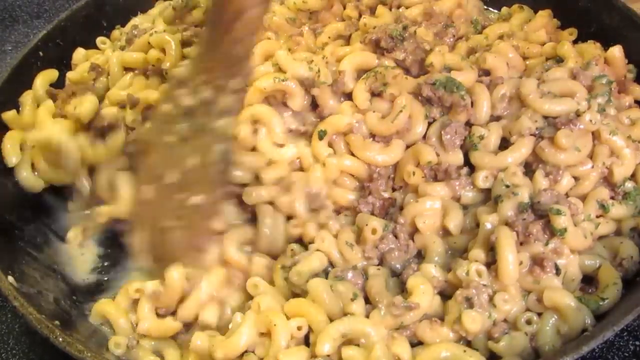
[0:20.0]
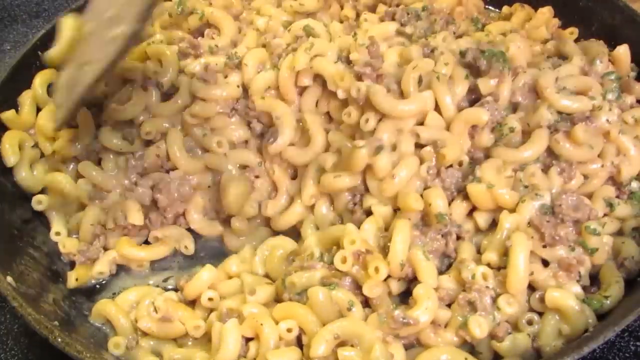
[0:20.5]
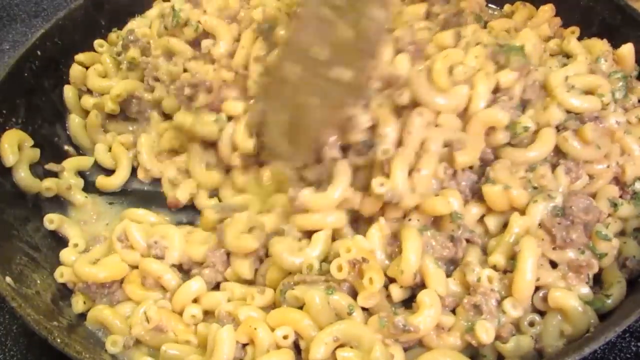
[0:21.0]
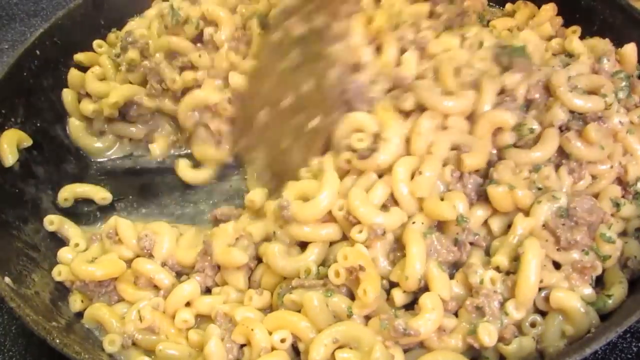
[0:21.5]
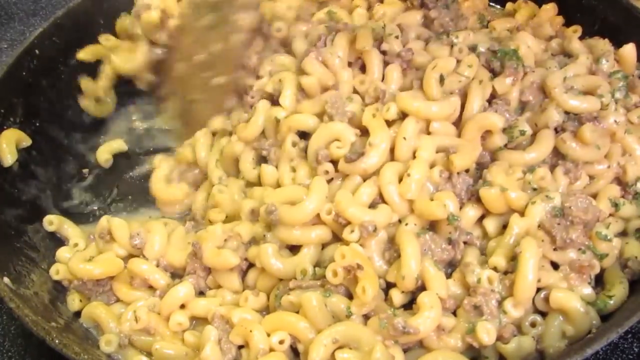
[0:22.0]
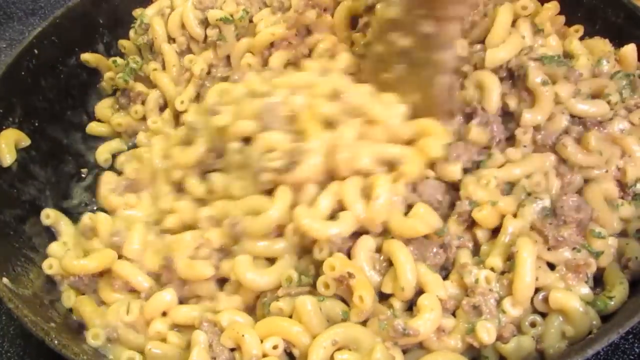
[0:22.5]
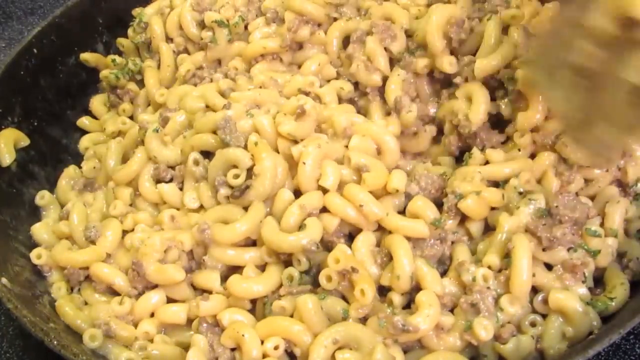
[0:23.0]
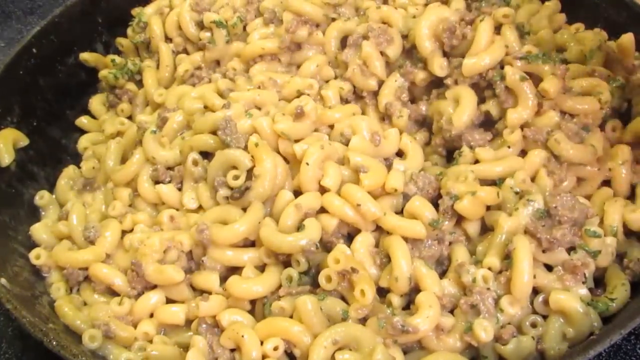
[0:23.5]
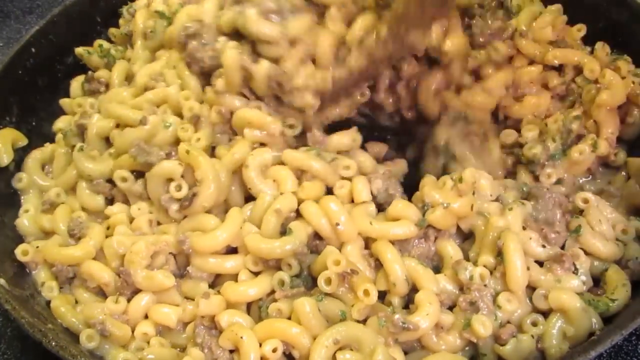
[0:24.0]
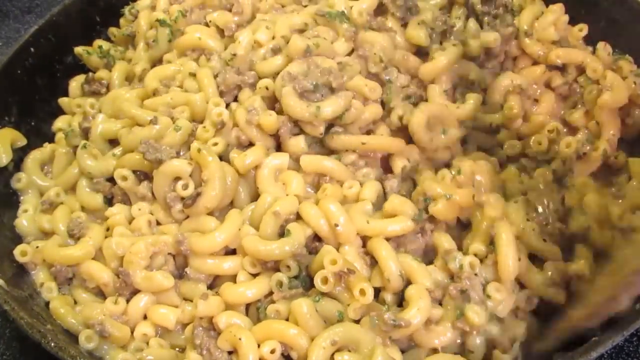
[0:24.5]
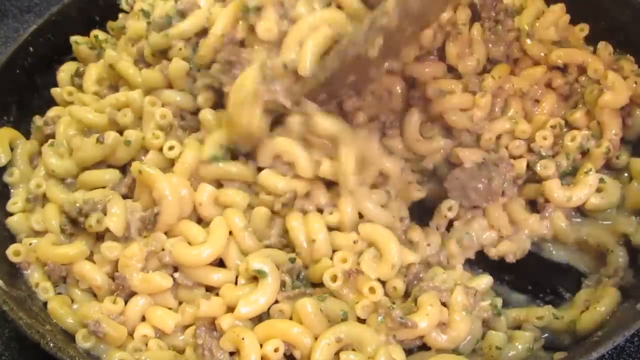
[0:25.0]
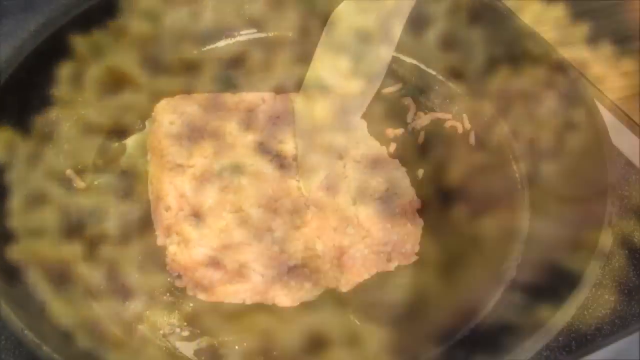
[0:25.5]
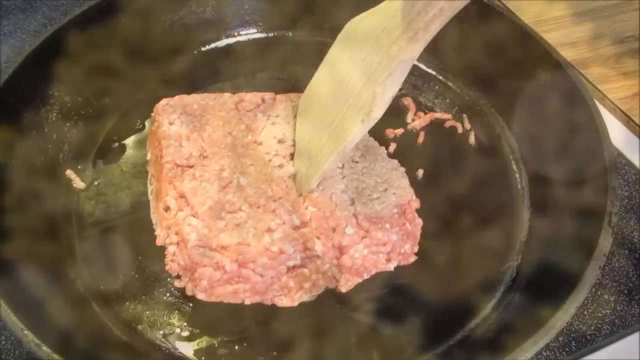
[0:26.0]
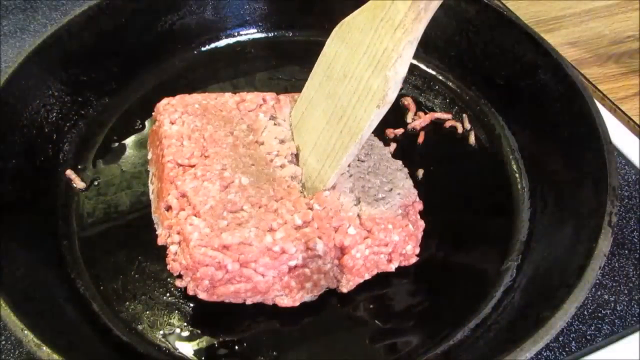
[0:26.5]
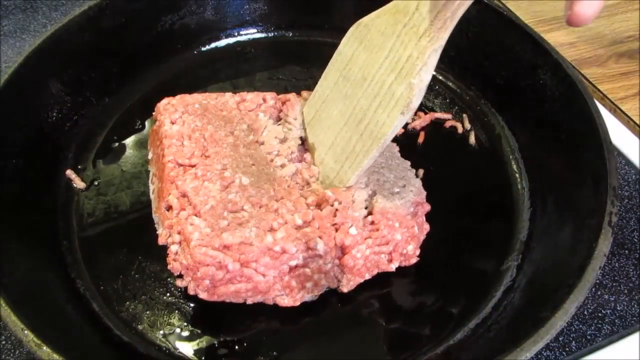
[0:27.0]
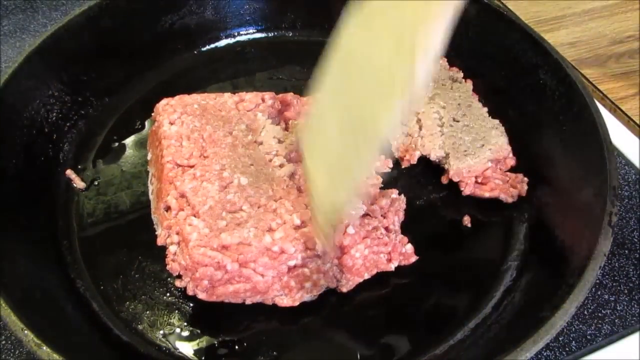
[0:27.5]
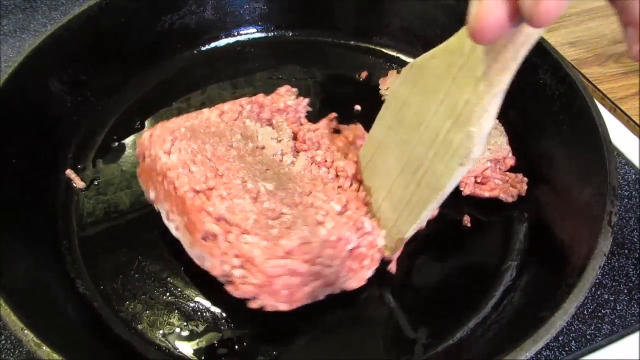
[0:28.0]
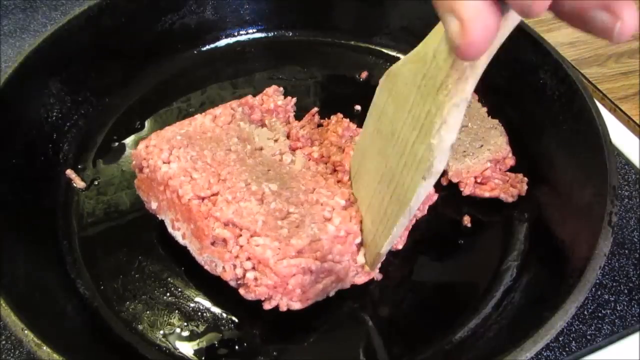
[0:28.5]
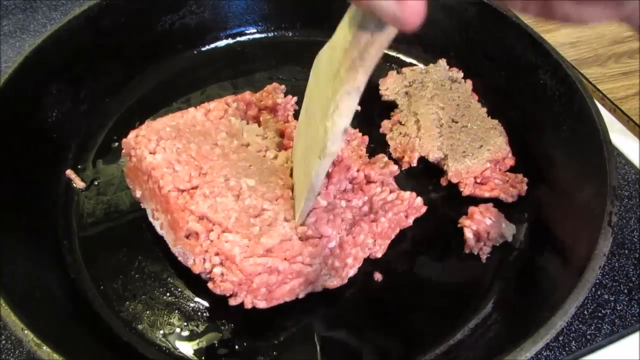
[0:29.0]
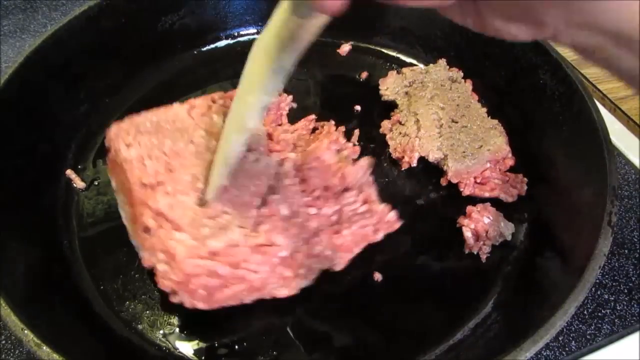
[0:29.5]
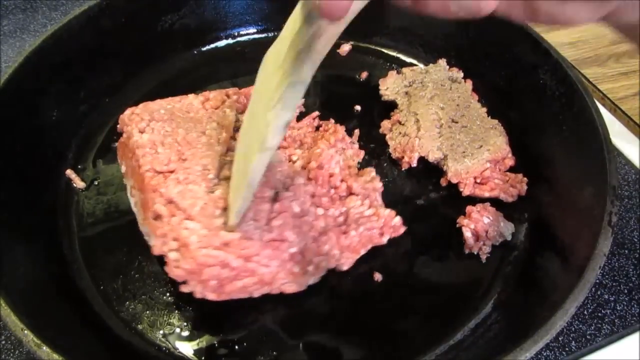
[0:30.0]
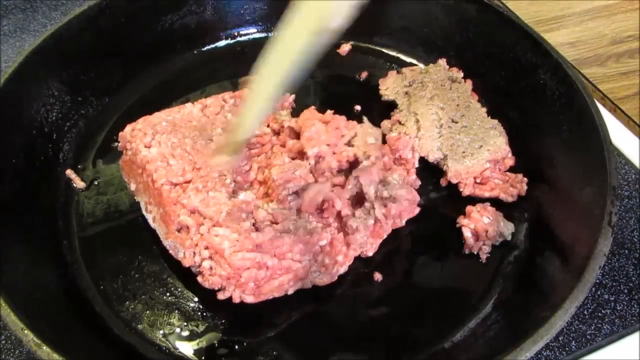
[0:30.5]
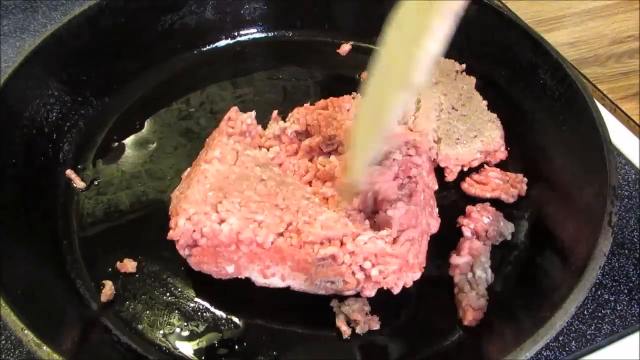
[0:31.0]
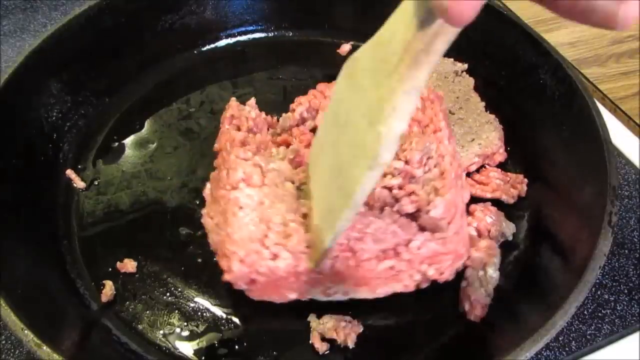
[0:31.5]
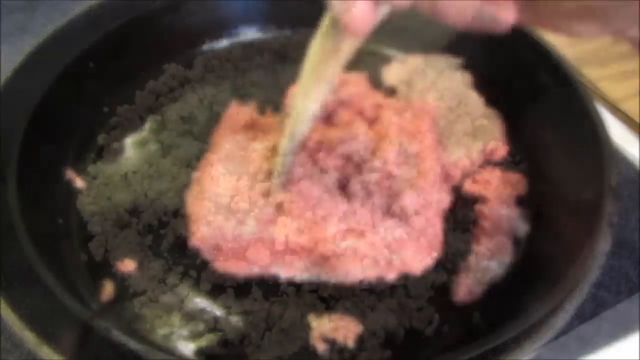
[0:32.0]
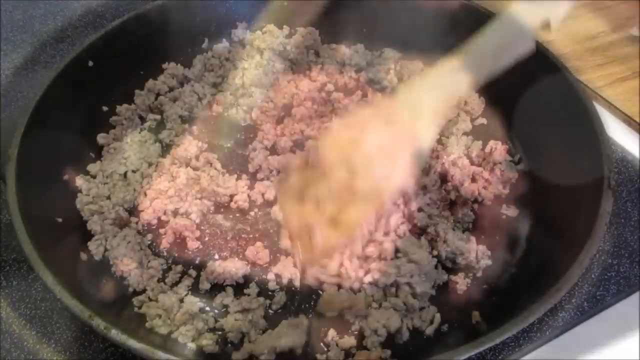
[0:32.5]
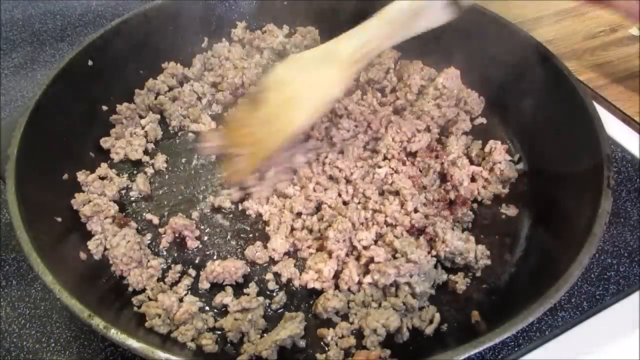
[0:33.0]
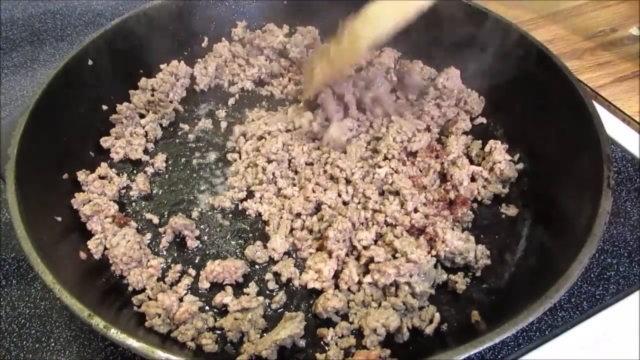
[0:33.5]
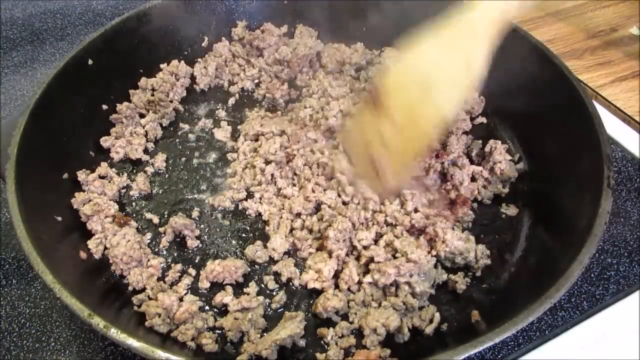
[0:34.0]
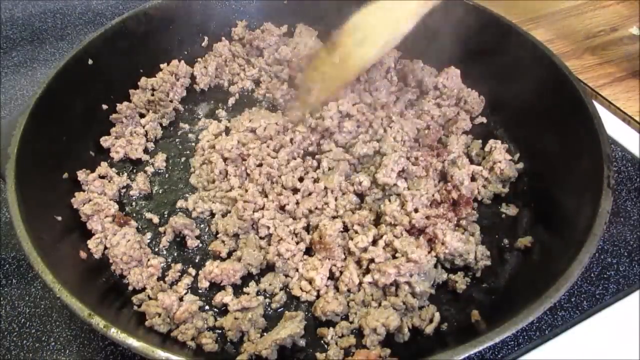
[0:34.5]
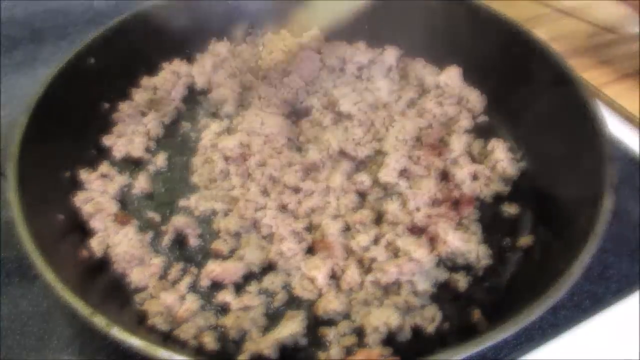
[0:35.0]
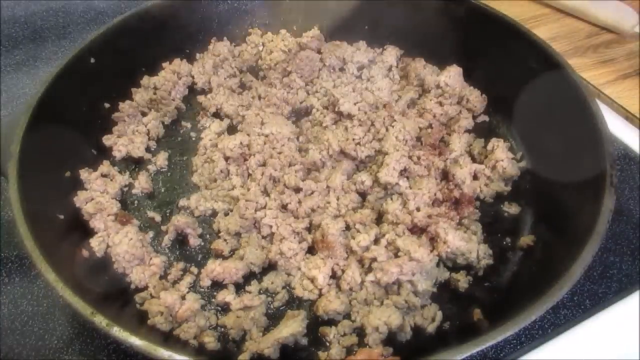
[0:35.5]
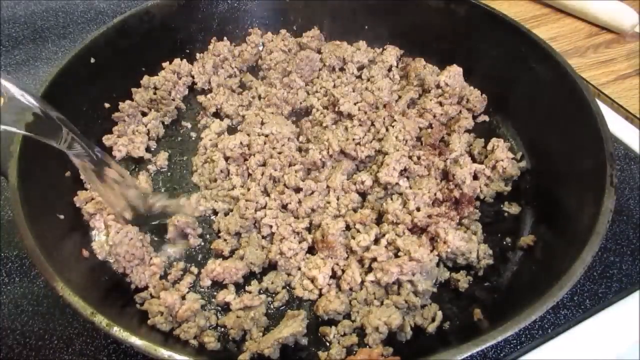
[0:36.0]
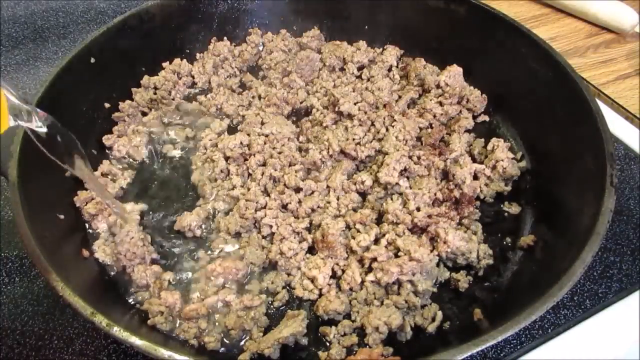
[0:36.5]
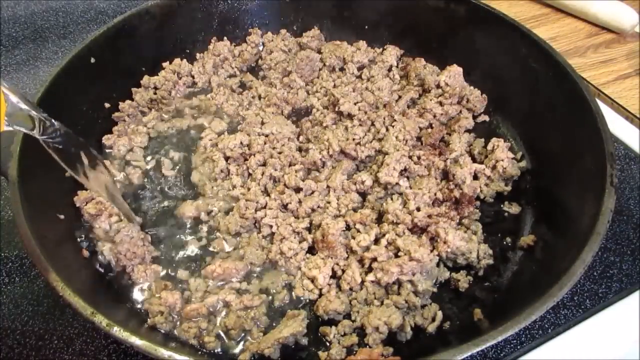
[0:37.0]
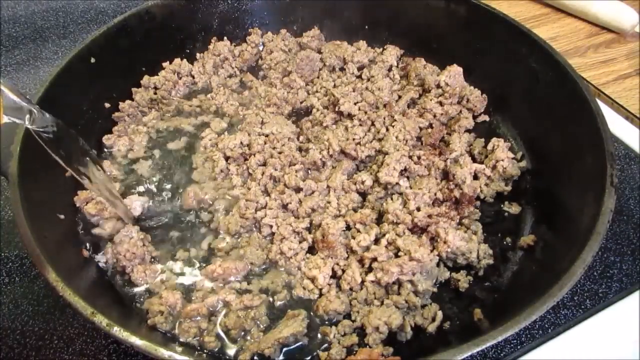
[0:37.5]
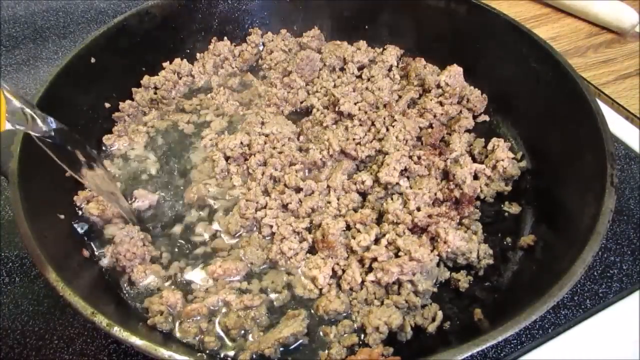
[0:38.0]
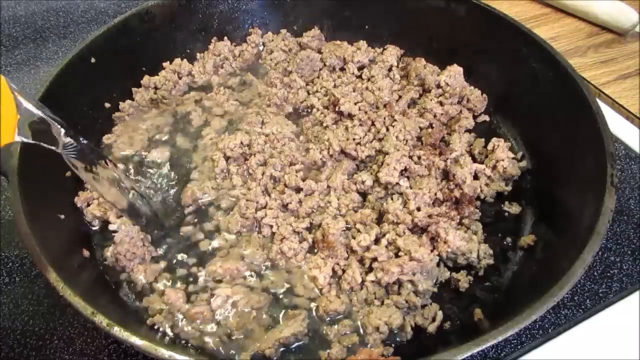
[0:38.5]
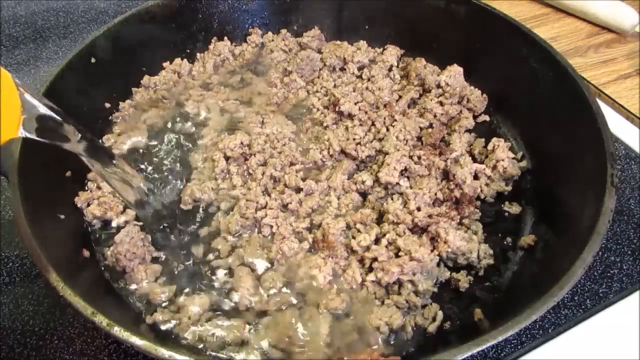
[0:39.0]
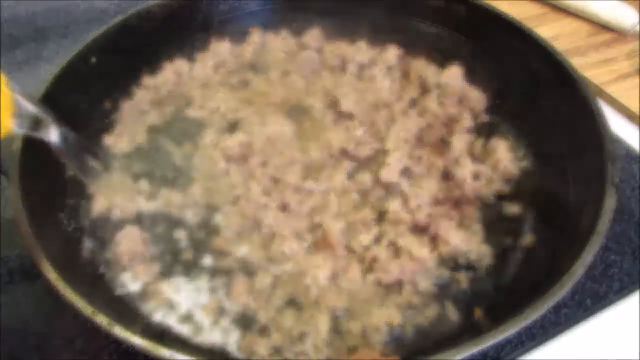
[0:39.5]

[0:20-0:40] The person continues mixing the macaroni, probably adding a few spices, in a big pan with a wooden spatula. The surface beside the pan is black and white granite, and the stove seems to be a fitted stove with granite on the side. The video then switches to a somewhat empty pan holding a four-cornered cube of mincemeat, which is spread out in the pan. It is cooked until it changes color; it does not turn brown and is not really fried. Later, a lot of water is added to the pan and it is mixed again. The macaroni is thick and well mixed with the sauce, which is becoming thicker.